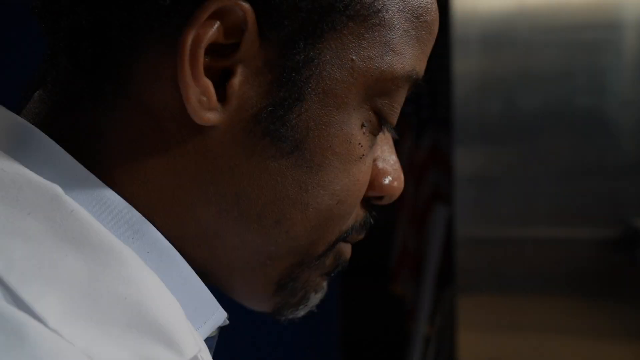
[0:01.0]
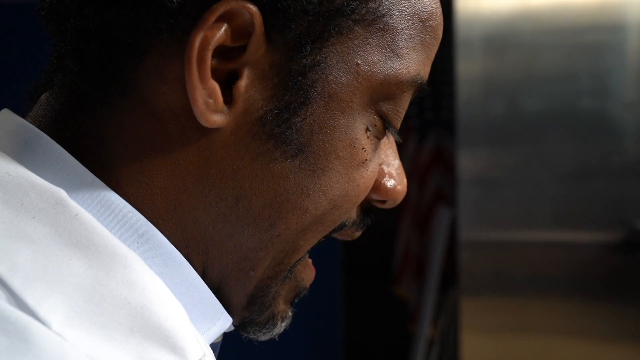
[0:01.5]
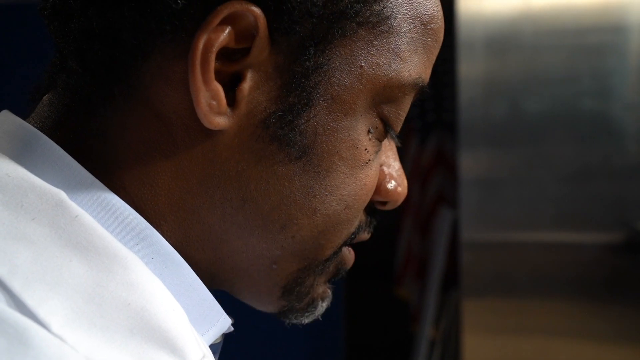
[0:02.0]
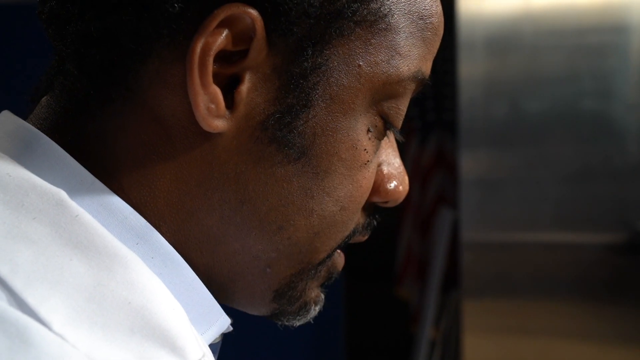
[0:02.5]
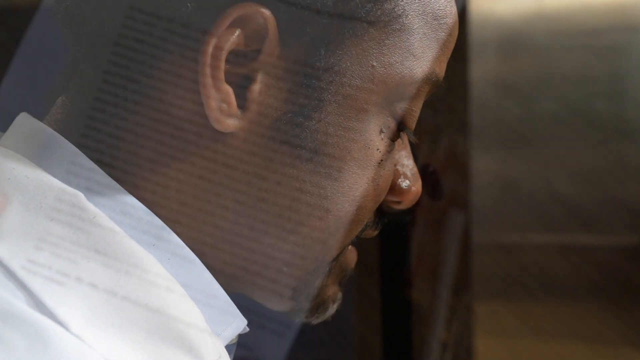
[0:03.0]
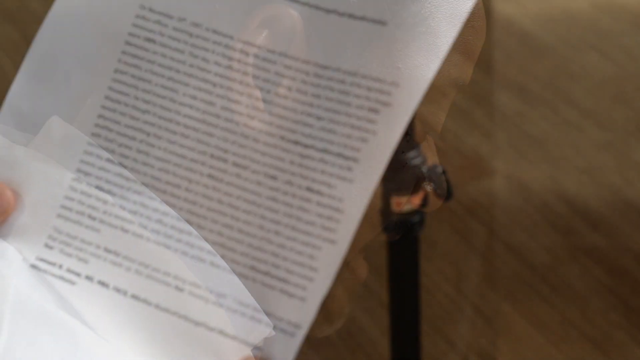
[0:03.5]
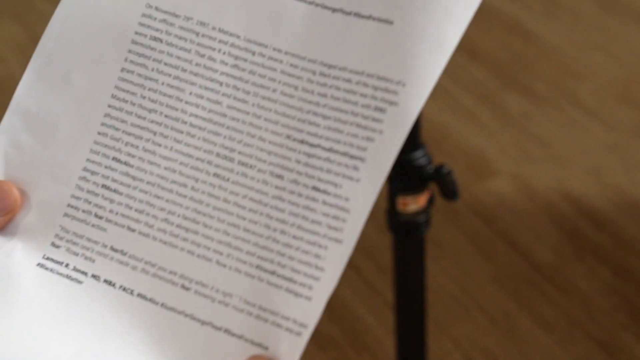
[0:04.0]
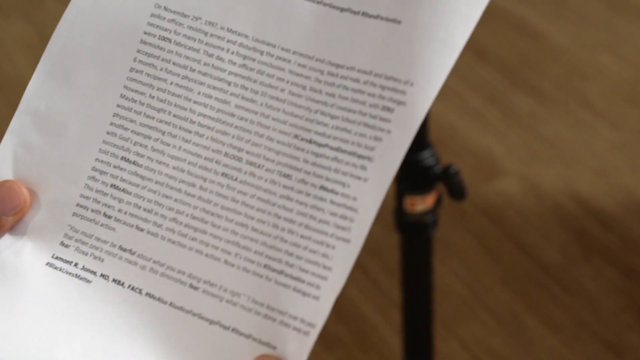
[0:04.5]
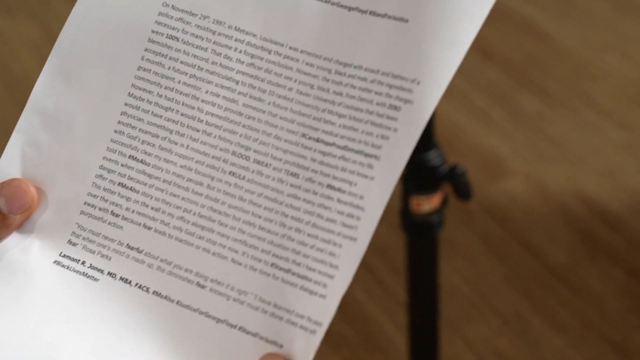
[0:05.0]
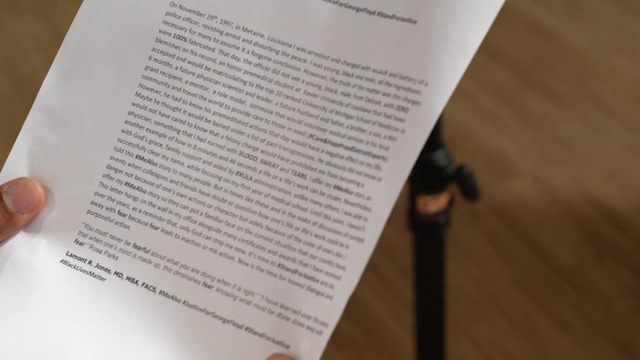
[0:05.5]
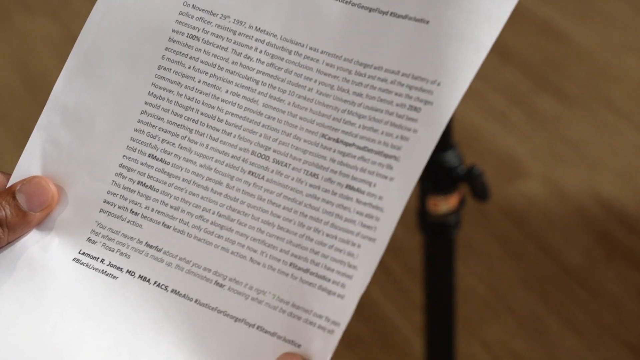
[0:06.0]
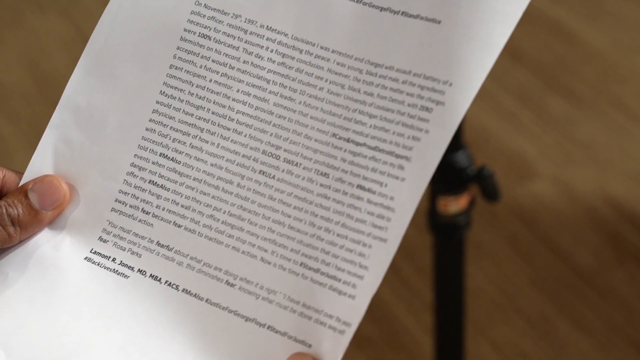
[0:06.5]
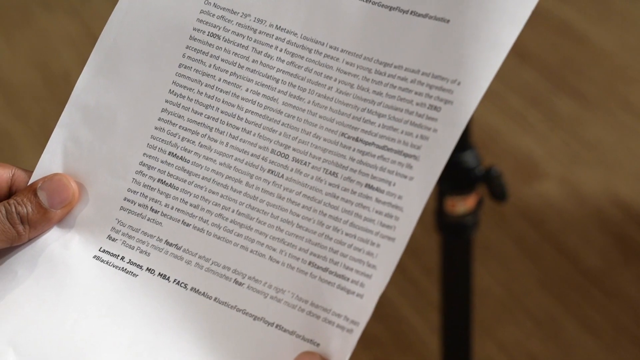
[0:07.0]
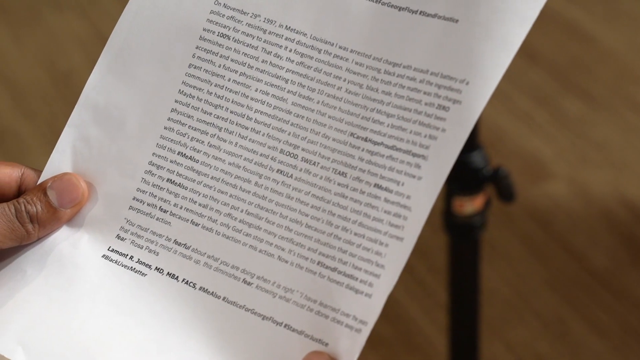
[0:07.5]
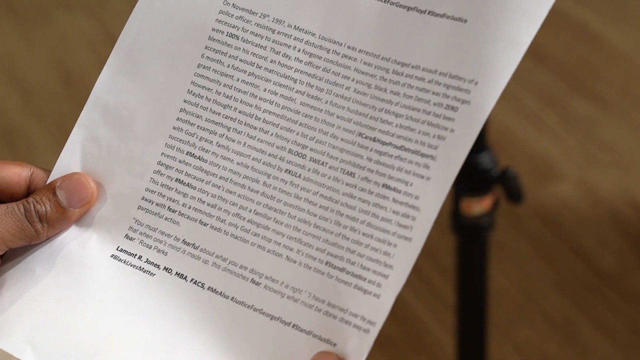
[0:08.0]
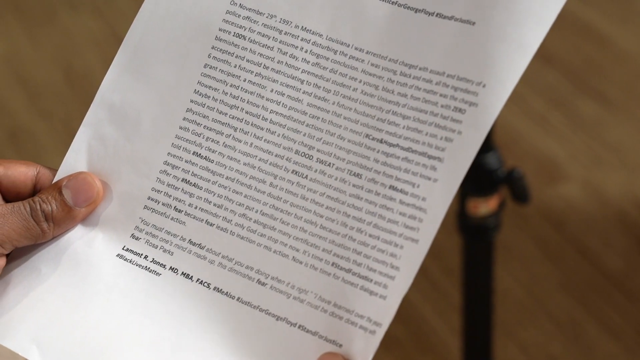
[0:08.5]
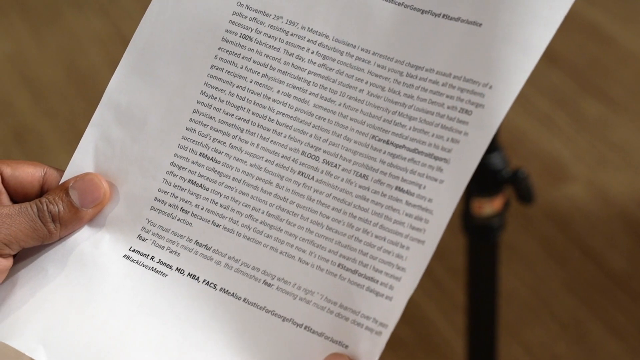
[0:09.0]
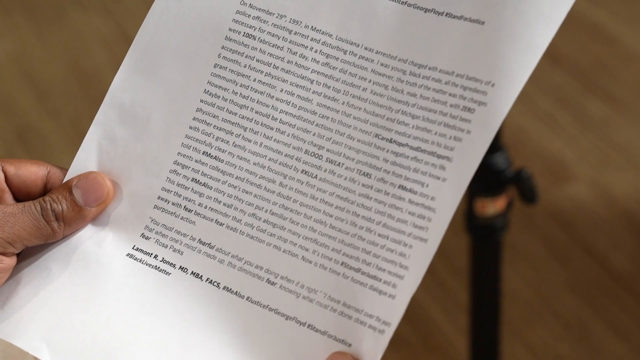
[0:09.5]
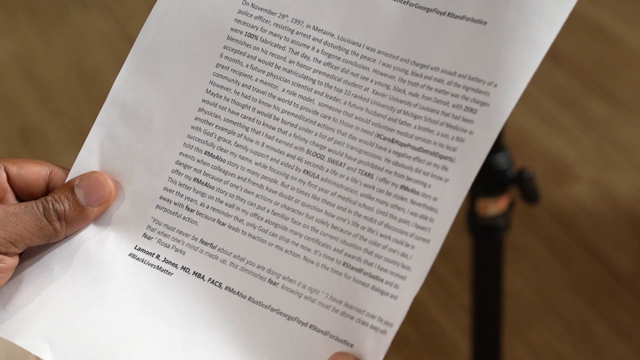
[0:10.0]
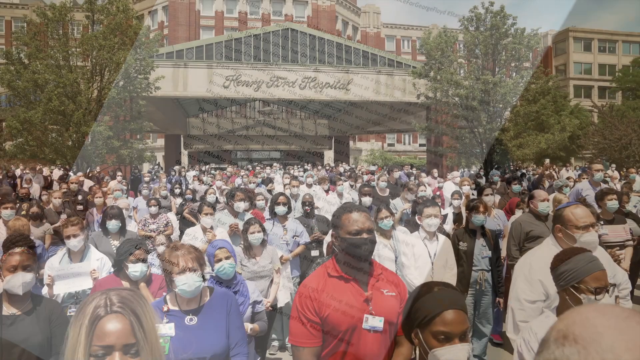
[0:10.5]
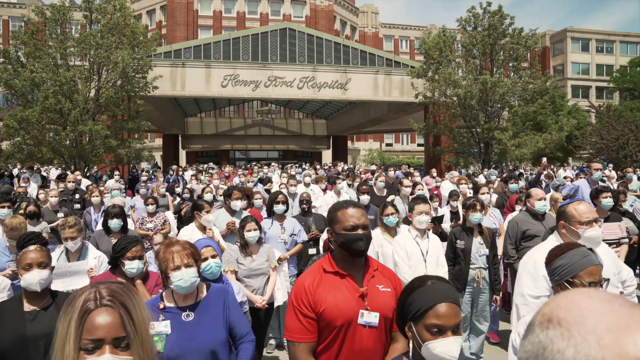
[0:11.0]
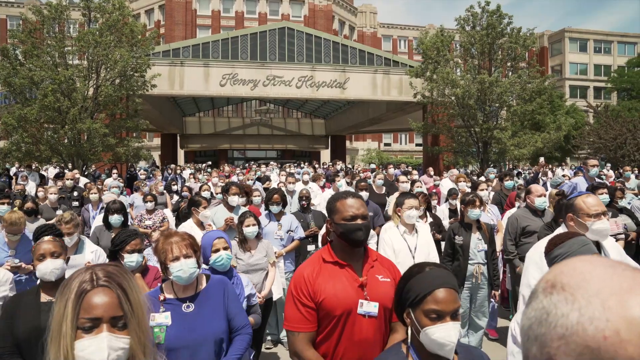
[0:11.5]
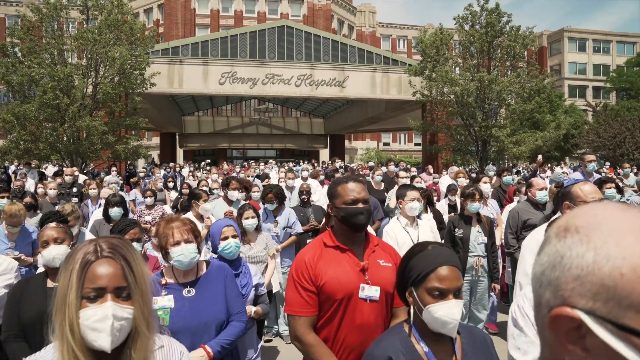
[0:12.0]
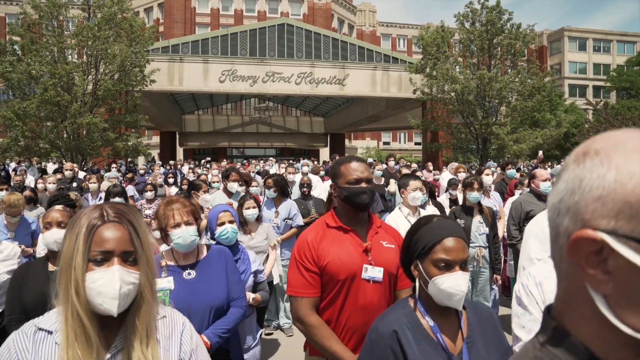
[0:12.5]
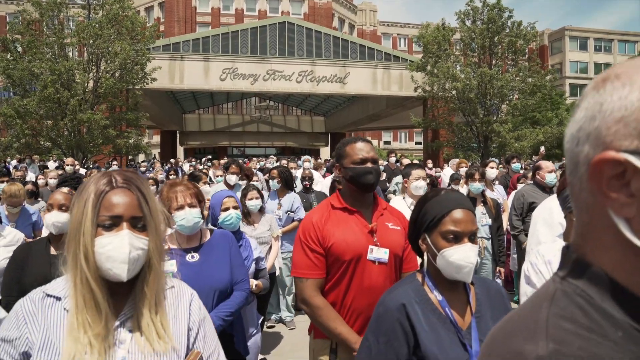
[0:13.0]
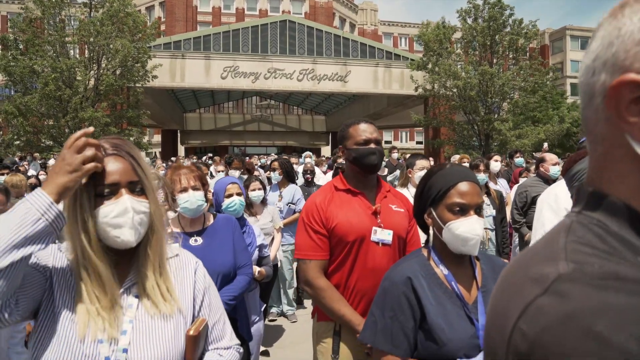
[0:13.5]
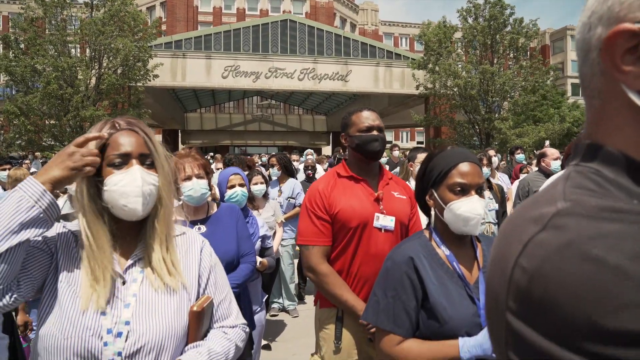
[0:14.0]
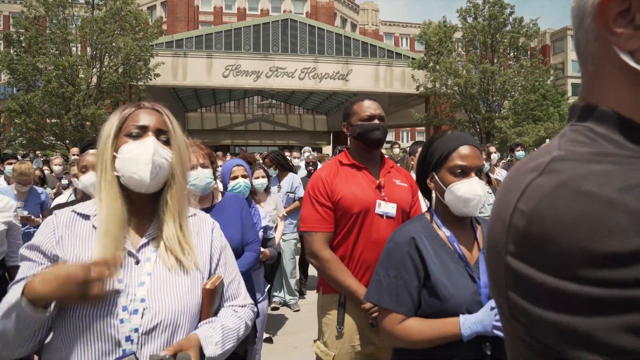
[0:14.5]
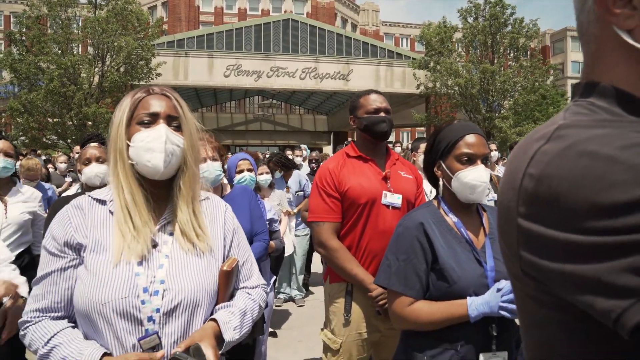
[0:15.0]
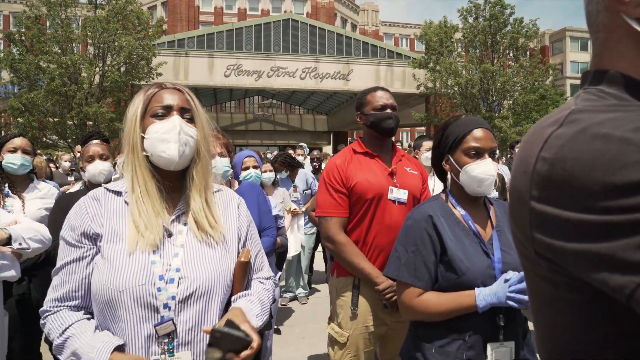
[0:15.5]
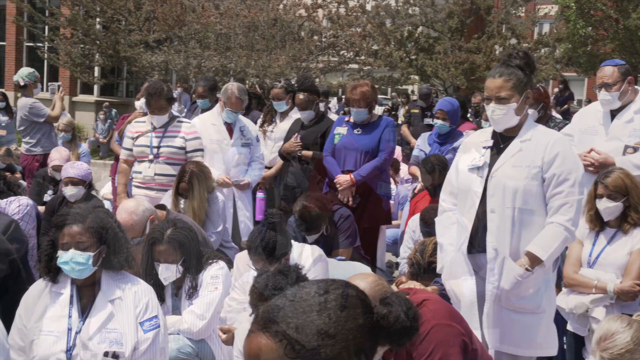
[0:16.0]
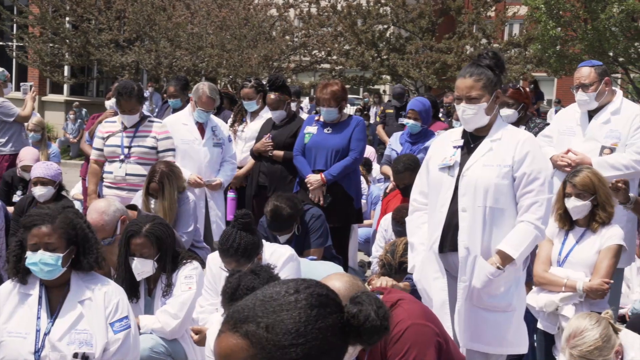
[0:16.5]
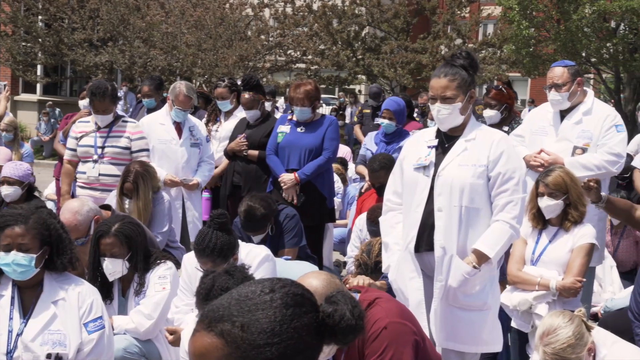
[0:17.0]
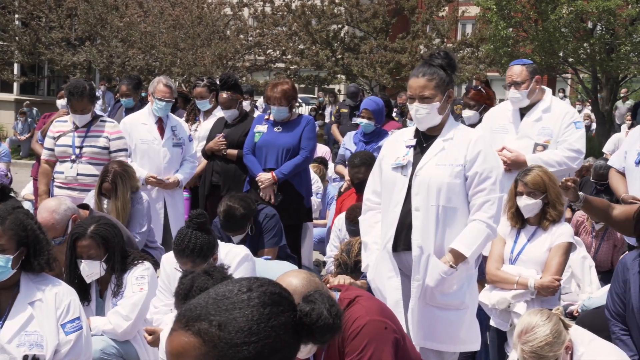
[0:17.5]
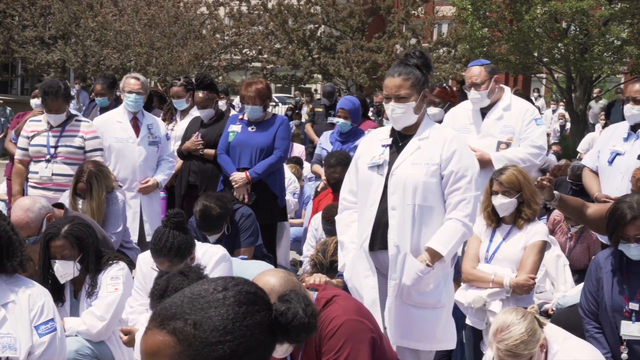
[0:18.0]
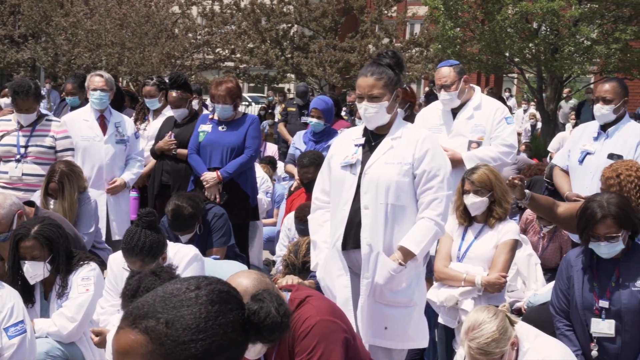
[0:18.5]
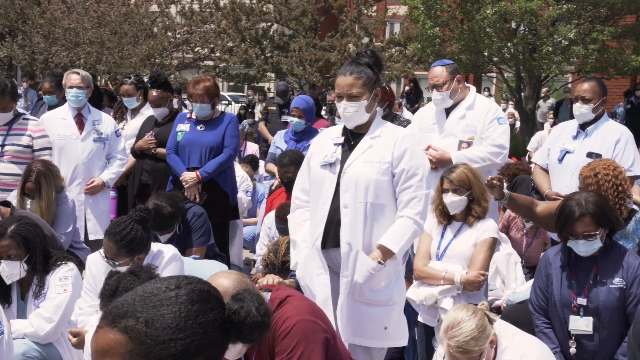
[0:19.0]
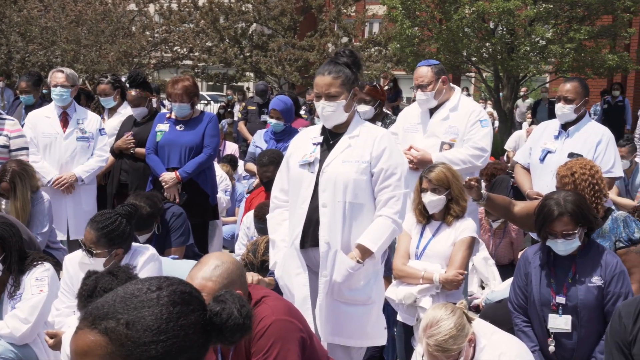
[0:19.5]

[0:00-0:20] A close-up shows a man in profile, looking down at something and speaking. The view then reveals that he is holding a piece of paper in his hand and reading the text on it; his left hand is visible on screen. The scene shifts to a very large crowd assembled in front of a large red brick building with a sign that reads "Henry Ford Hospital." The crowd fills an area in front of the hospital's portico. Everyone is wearing a face mask. There are men and women; some wear doctor's coats, some wear surgical scrubs, and some are in everyday dress. Women wearing hijabs are visible, along with at least one man wearing a yarmulke. It is daytime outside the hospital building, and the crowd is filmed from multiple angles.